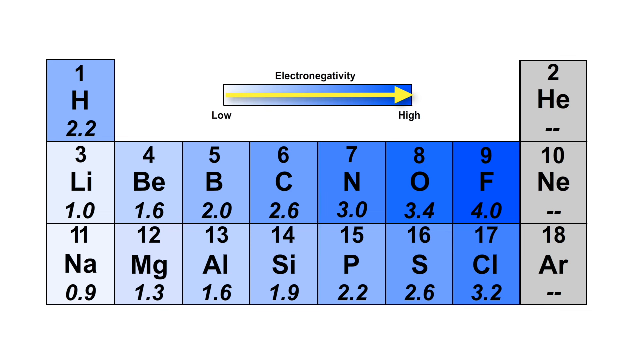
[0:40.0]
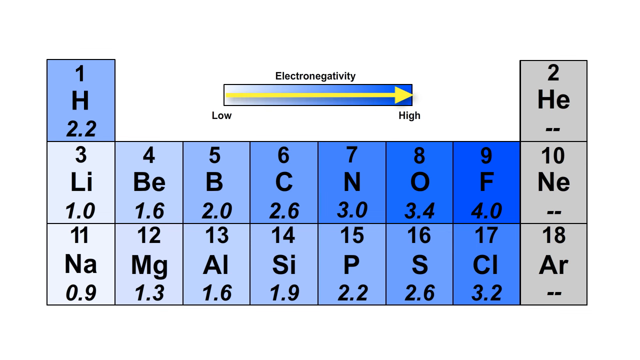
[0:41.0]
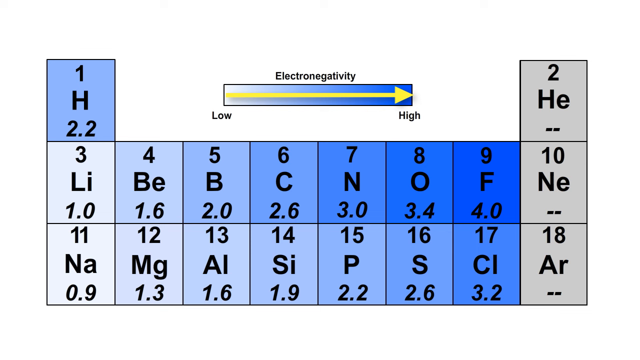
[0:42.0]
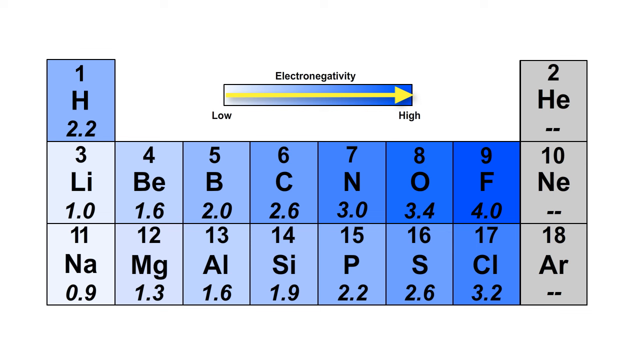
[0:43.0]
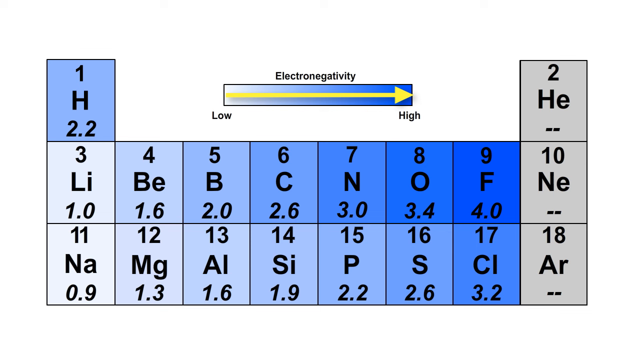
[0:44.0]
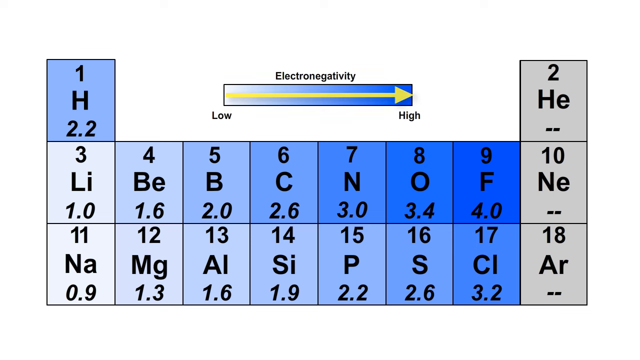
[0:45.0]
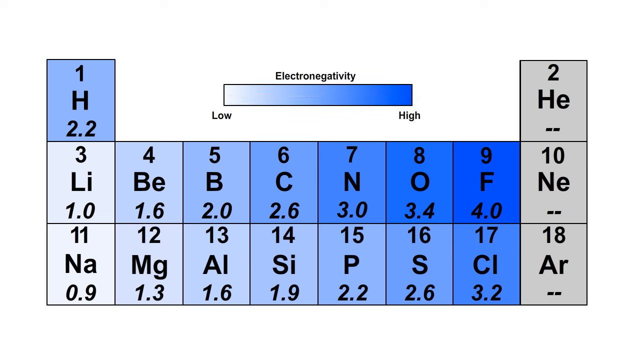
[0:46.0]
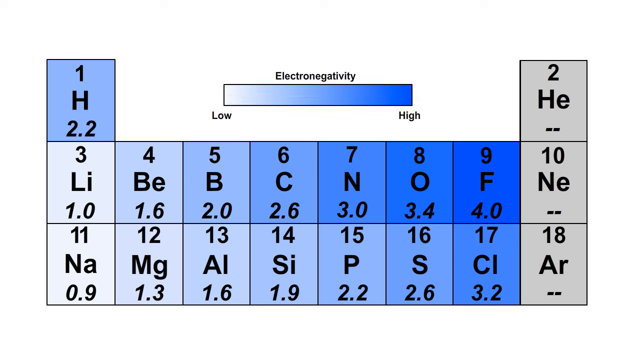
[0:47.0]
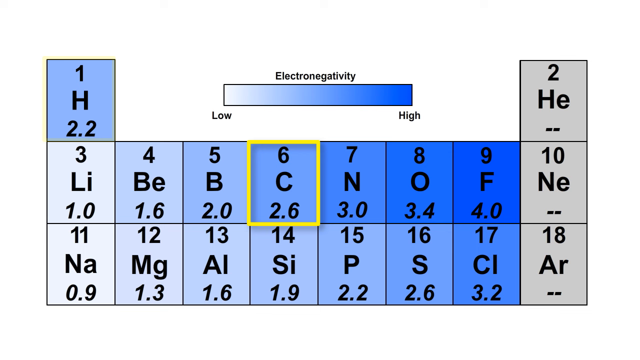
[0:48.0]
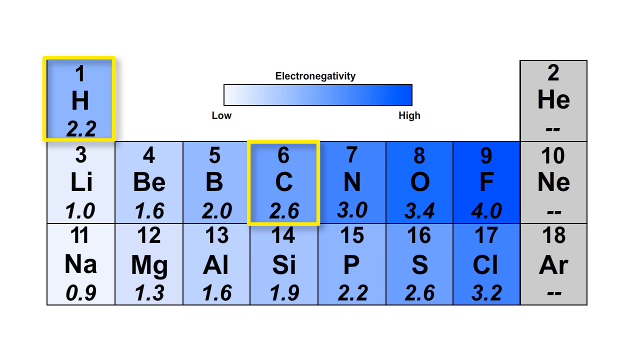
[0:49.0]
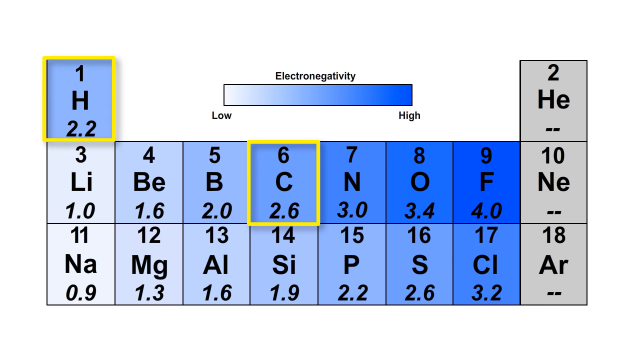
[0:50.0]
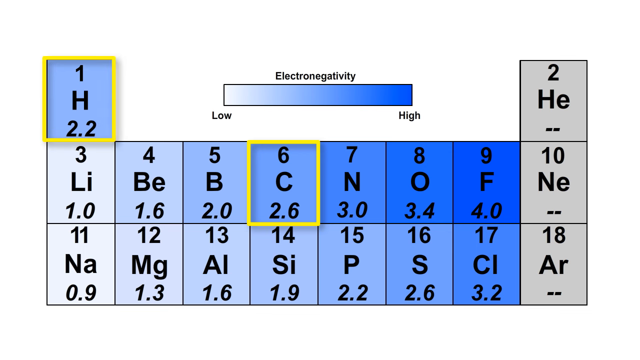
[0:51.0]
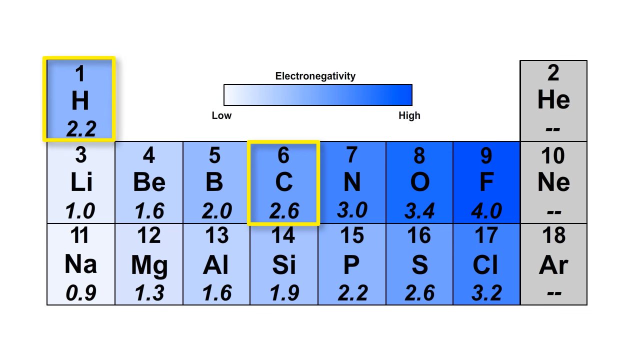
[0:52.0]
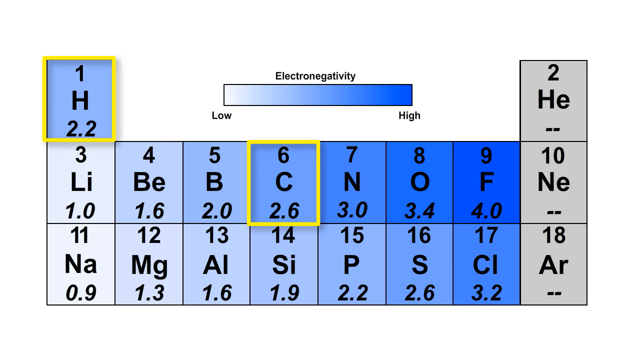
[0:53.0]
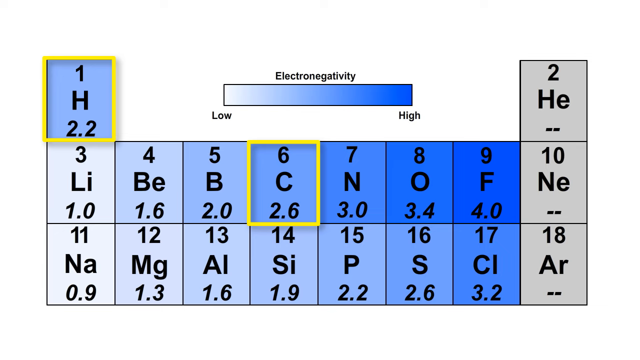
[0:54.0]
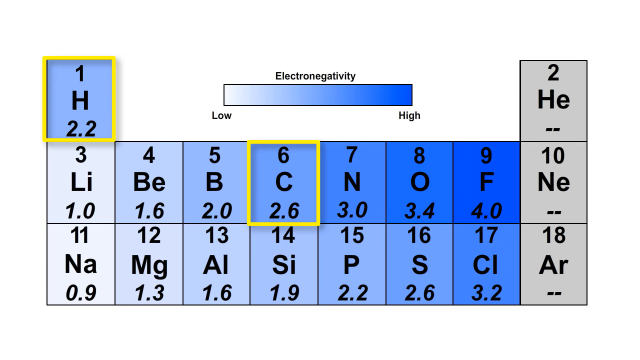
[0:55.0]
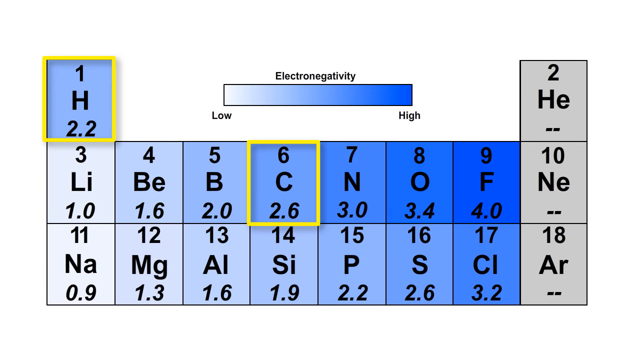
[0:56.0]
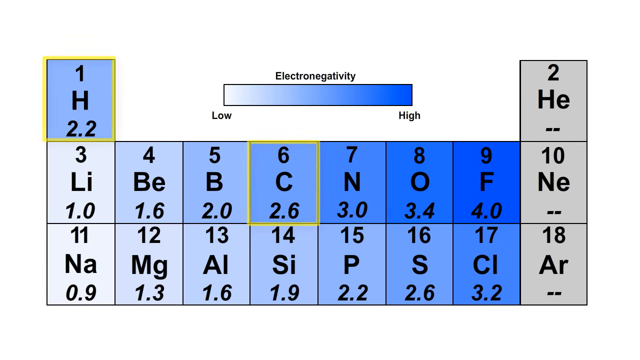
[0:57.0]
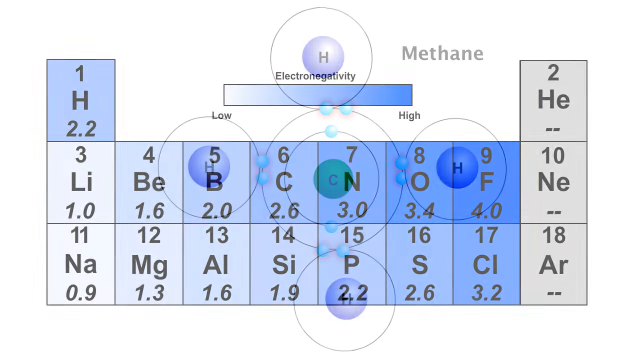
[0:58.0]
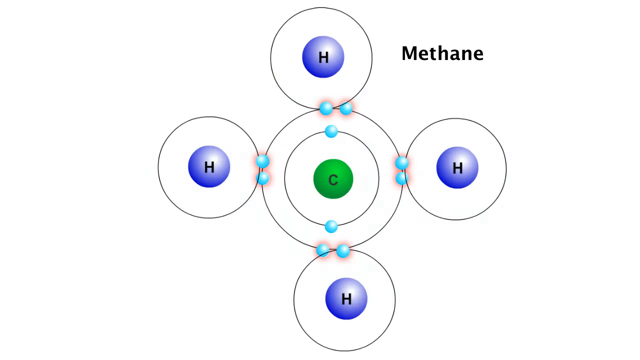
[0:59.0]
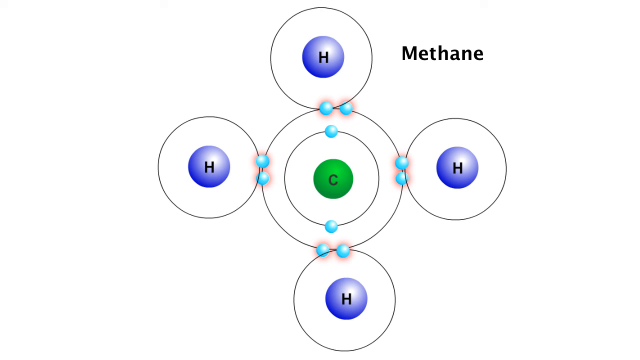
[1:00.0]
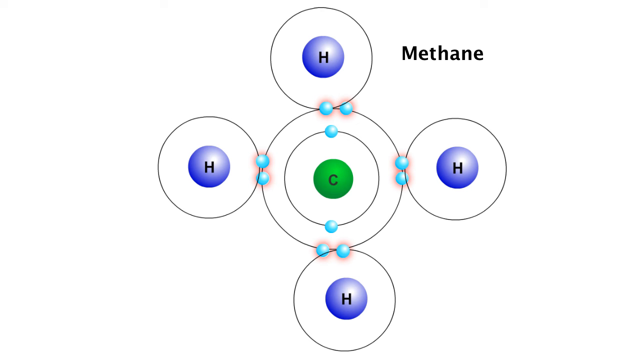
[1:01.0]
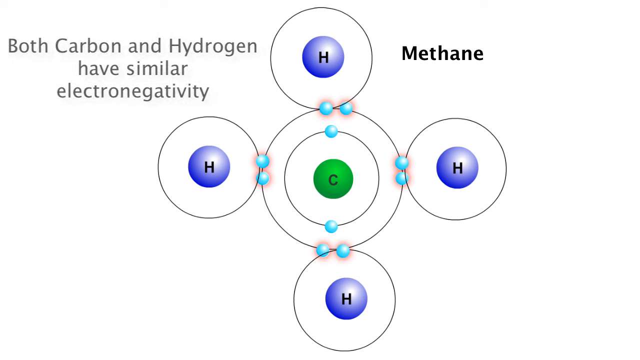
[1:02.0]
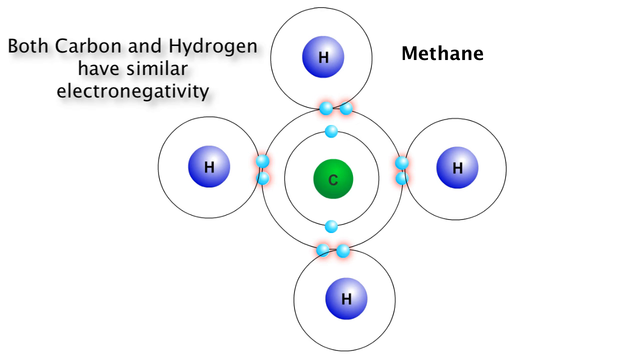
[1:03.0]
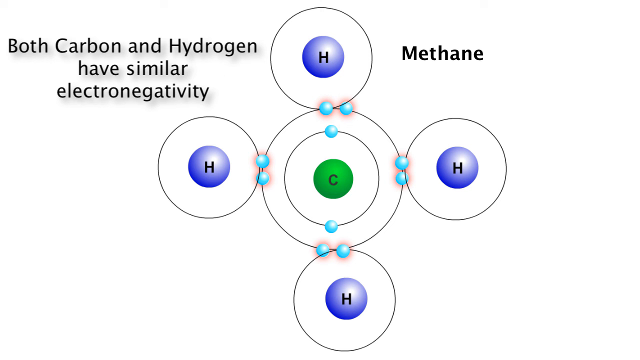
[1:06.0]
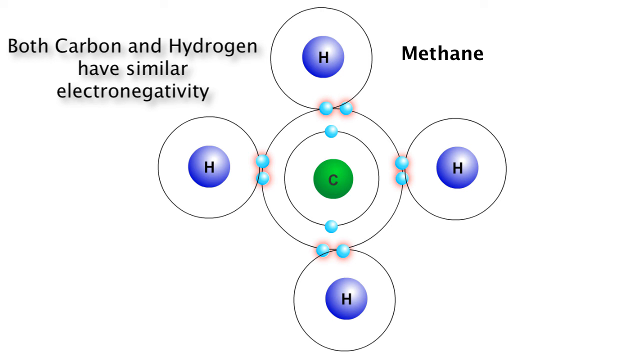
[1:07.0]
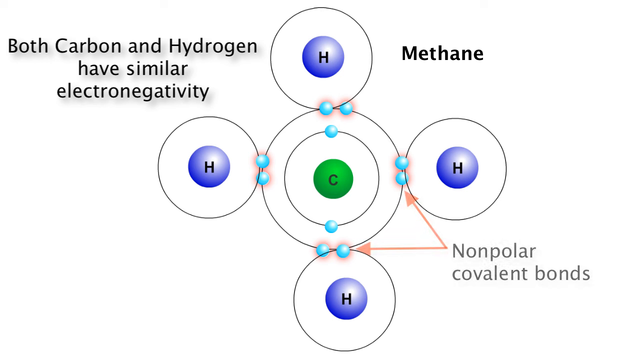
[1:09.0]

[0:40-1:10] The U-shaped segment of the periodic table shows elements including hydrogen, helium, lithium, beryllium, boron, carbon, nitrogen, oxygen, iron, neon, sodium, magnesium, possibly aluminum, silicon, and an unidentified P, with their electronegativity indicated by box colors ranging from gray to darker blue. Across the top, the color gradient shows electronegativity from low to high. A yellow arrow appears pointing from left to right, showing that electronegativity increases as the boxes get bluer. Hydrogen and carbon are then highlighted with a yellow outline overlaid on their black box outlines; both are a light blue, with hydrogen at 2.2 and carbon at 2.6. This is replaced by the carbon and hydrogen diagram, with the carbon surrounded by concentric circles and each hydrogen with a single circle, connected by blue spheres. Black text in the upper right of the screen identifies it as methane. A caption appears in the upper left reading "both carbon and hydrogen have similar electronegativity". Text then appears in the bottom right reading "non-polar covalent bonds", with red arrows pointing to the blue spheres connecting the right-hand and bottom hydrogens to the carbon.